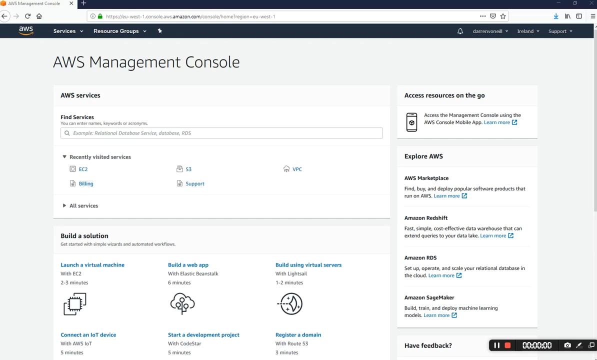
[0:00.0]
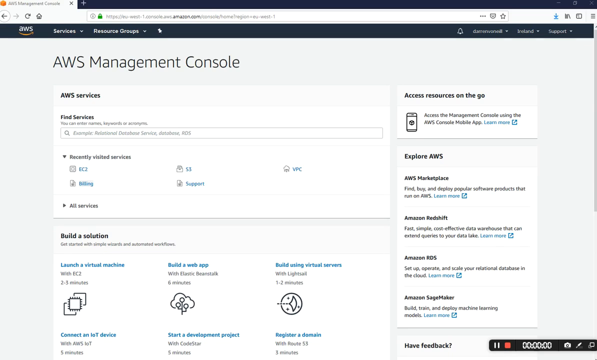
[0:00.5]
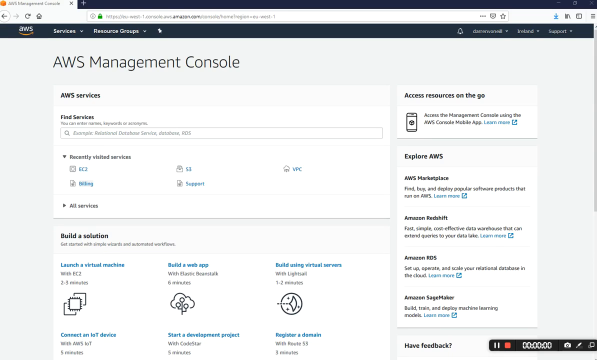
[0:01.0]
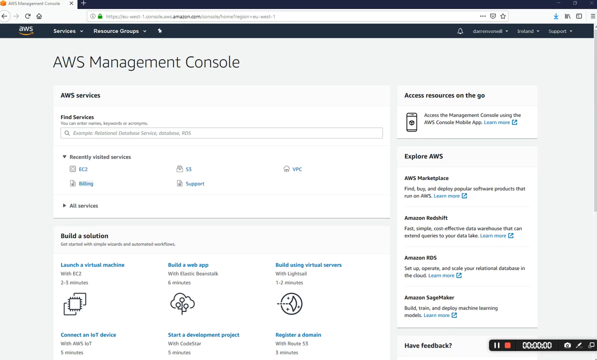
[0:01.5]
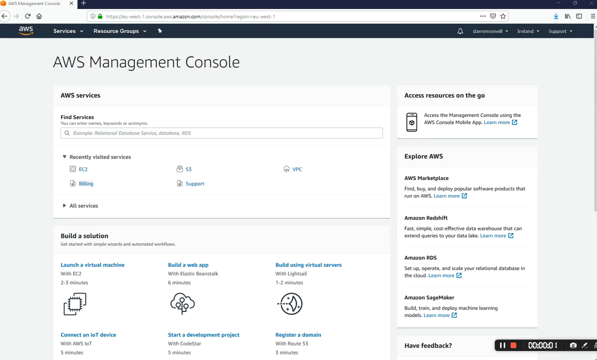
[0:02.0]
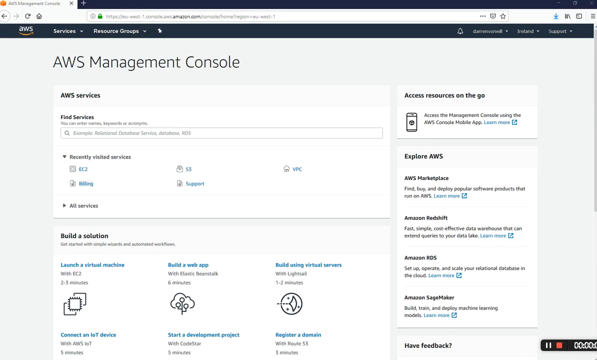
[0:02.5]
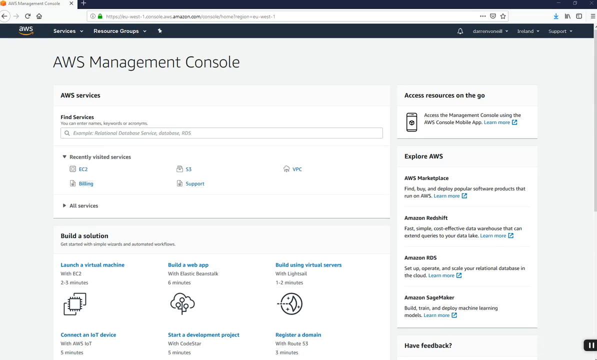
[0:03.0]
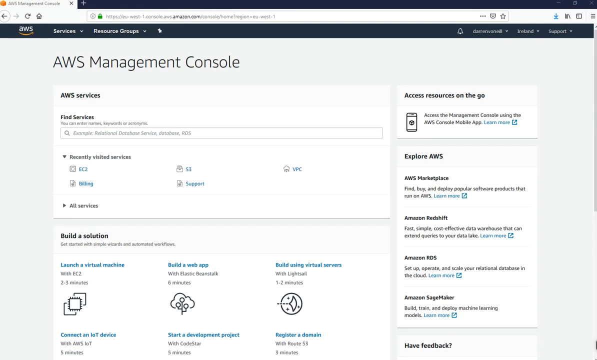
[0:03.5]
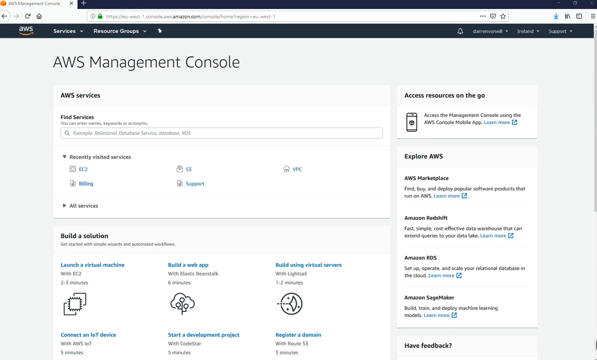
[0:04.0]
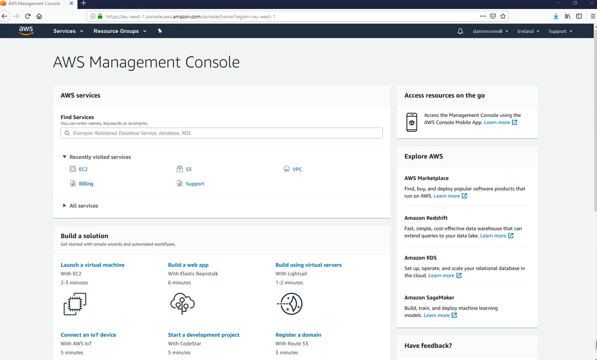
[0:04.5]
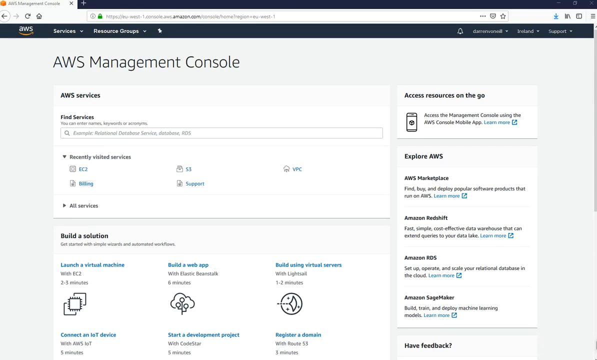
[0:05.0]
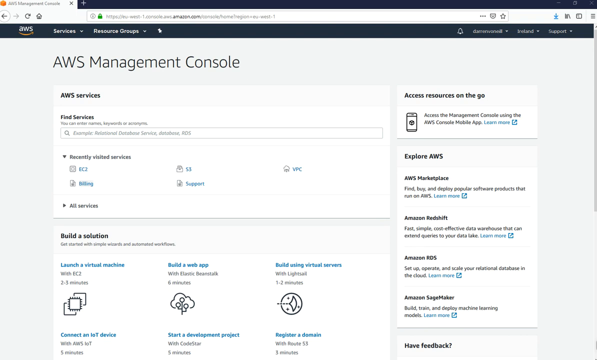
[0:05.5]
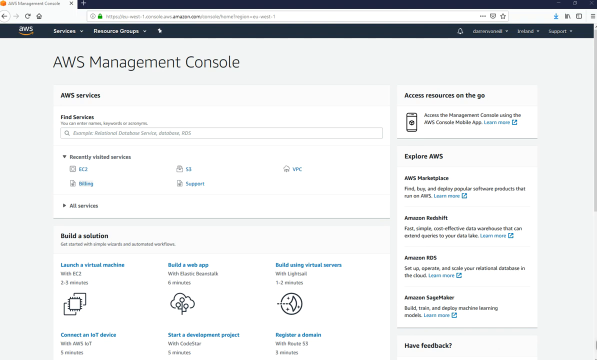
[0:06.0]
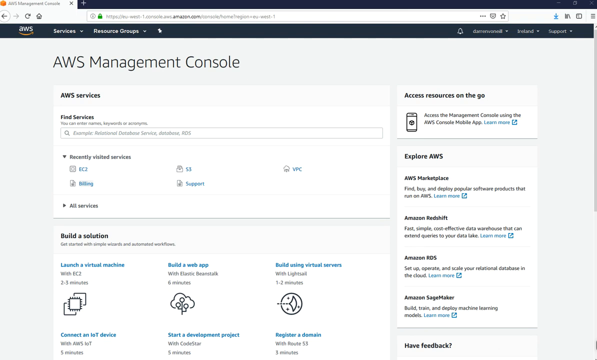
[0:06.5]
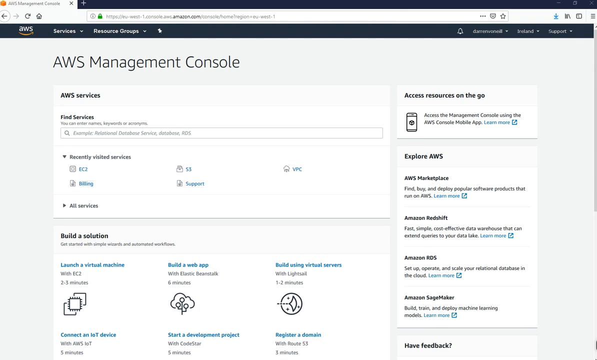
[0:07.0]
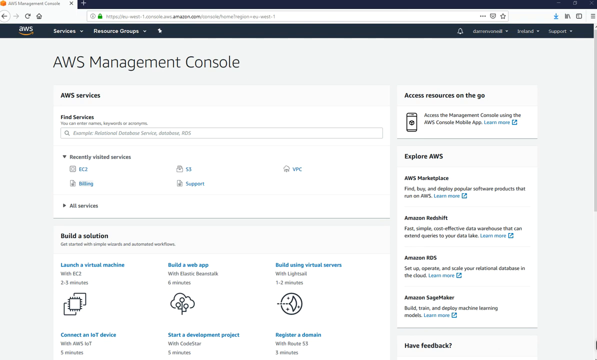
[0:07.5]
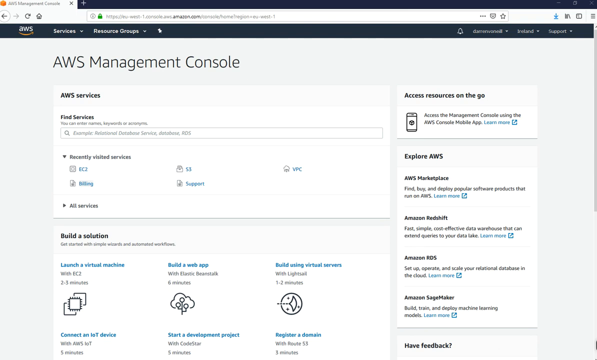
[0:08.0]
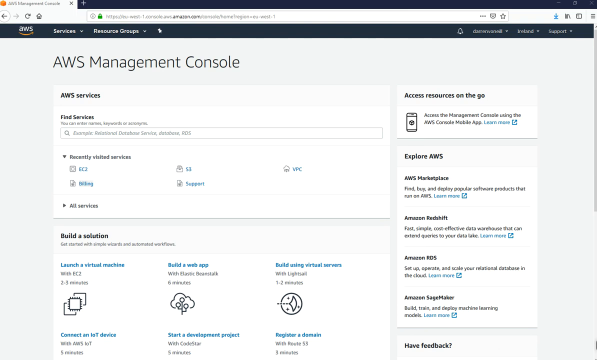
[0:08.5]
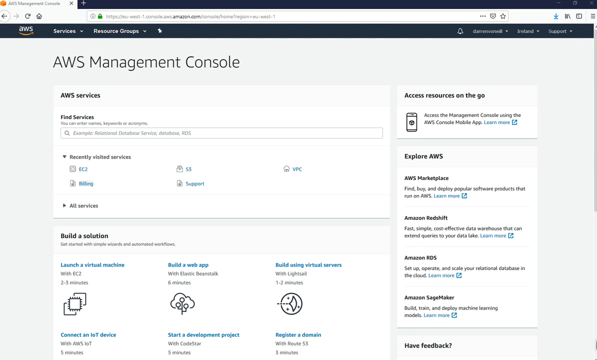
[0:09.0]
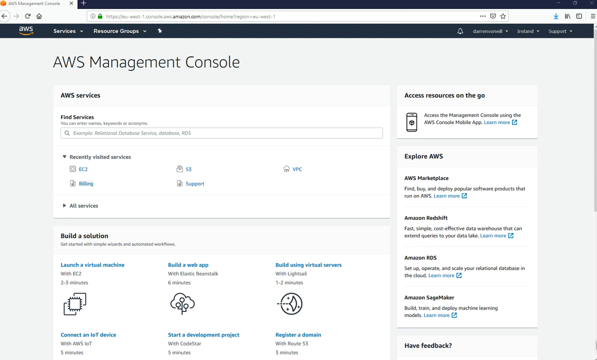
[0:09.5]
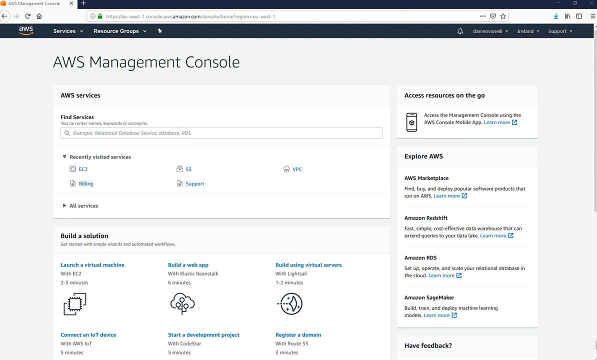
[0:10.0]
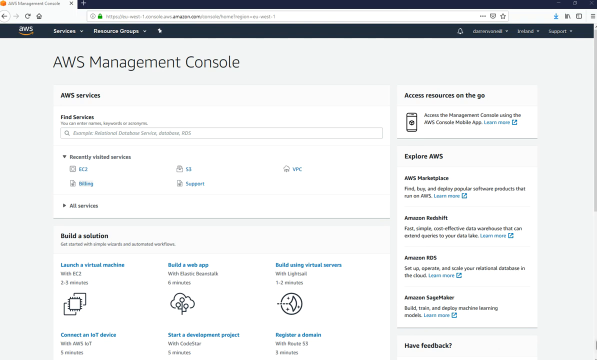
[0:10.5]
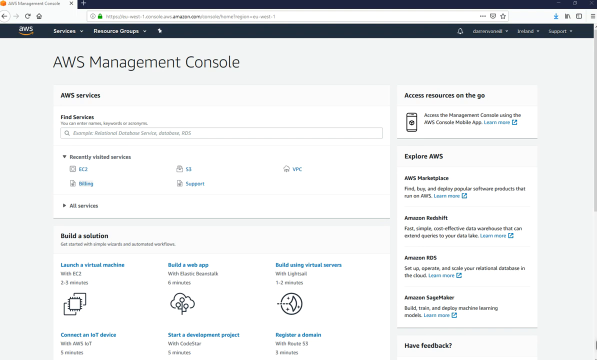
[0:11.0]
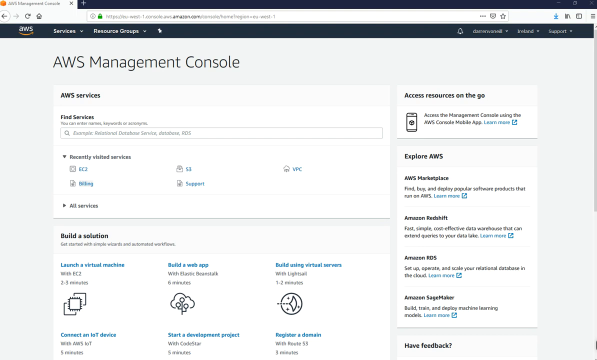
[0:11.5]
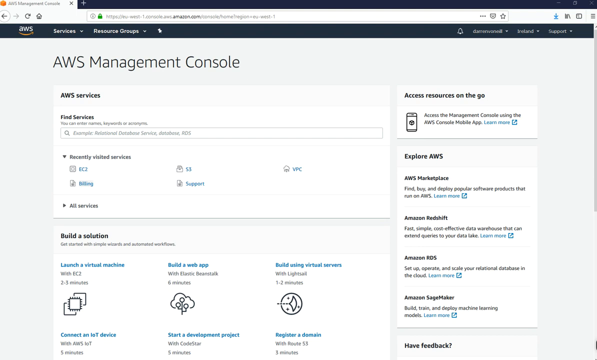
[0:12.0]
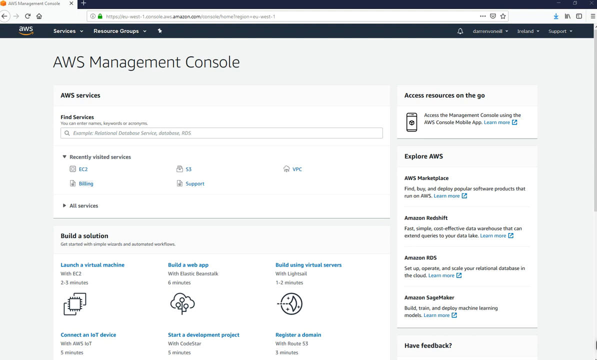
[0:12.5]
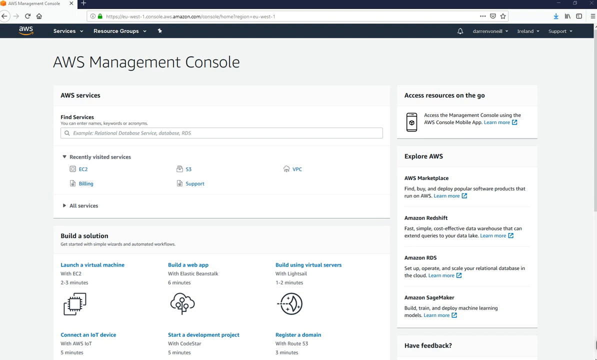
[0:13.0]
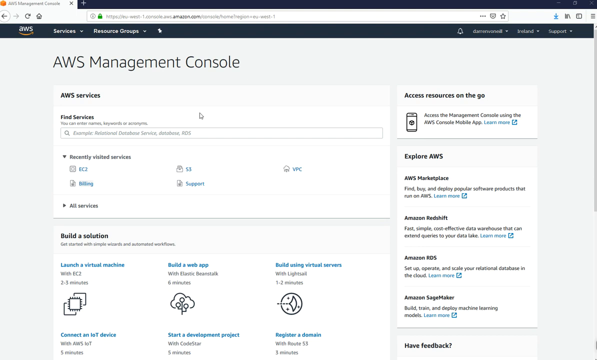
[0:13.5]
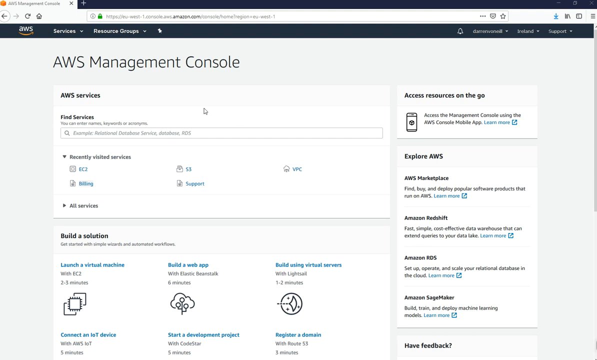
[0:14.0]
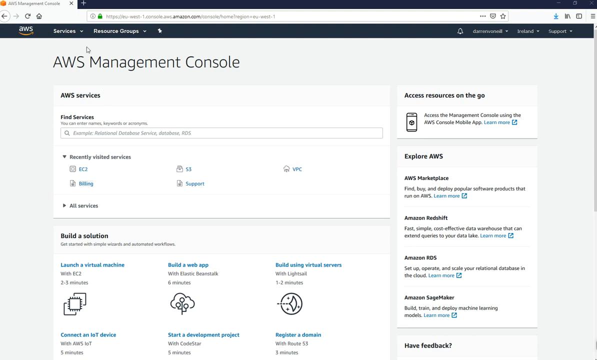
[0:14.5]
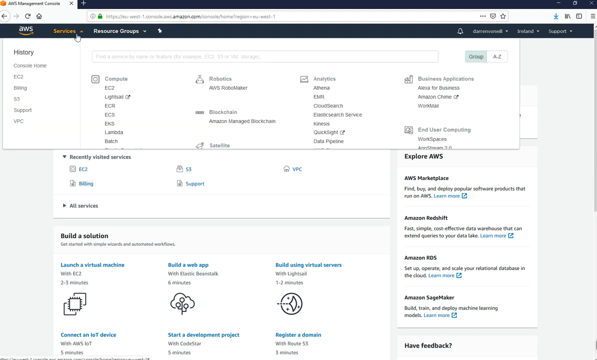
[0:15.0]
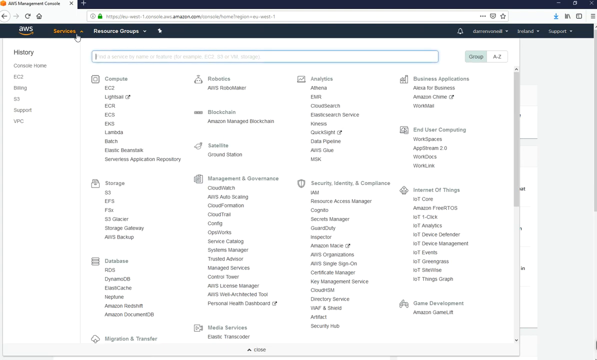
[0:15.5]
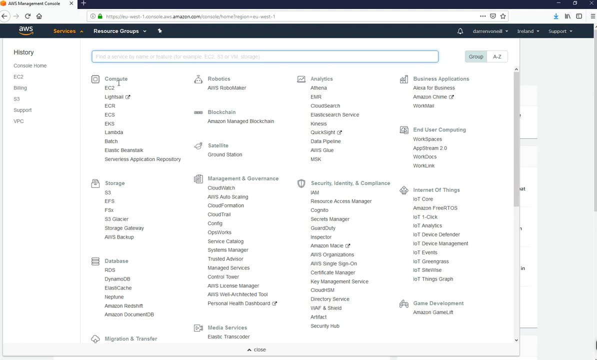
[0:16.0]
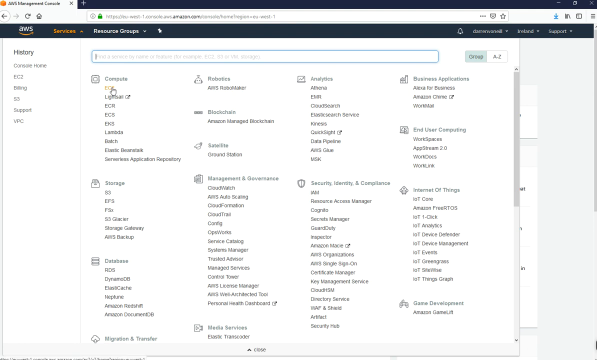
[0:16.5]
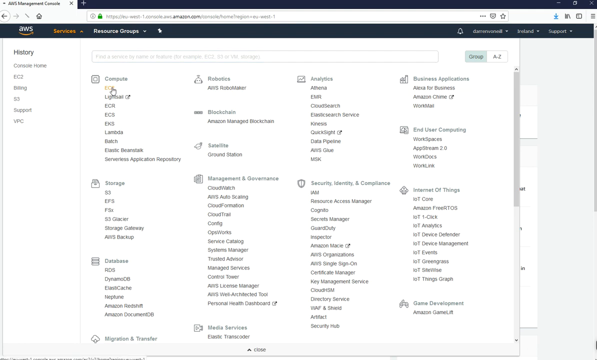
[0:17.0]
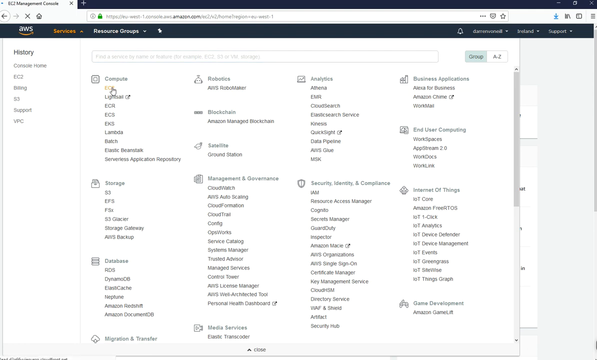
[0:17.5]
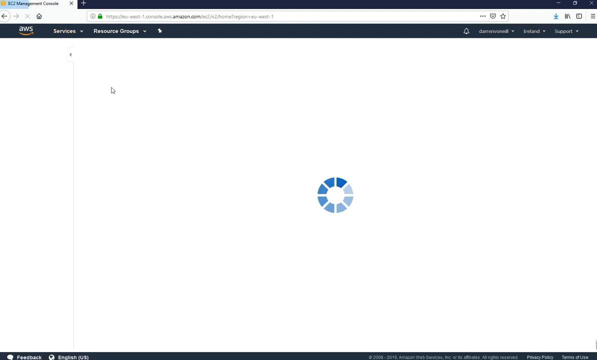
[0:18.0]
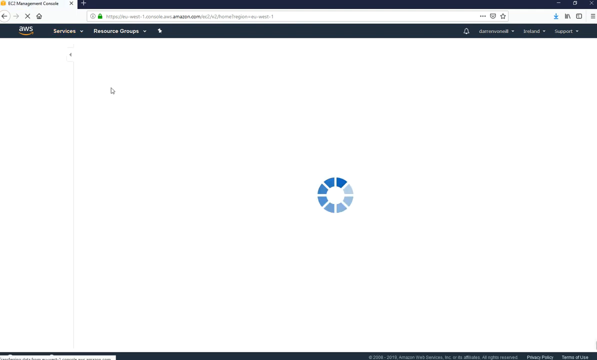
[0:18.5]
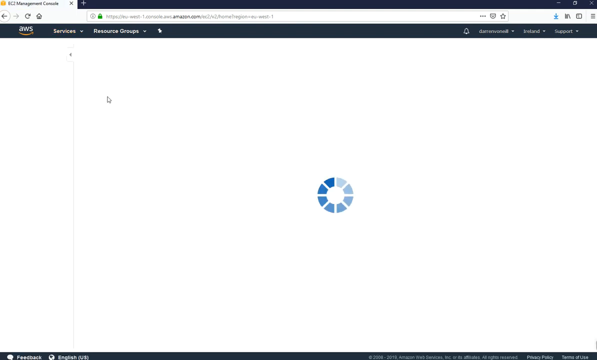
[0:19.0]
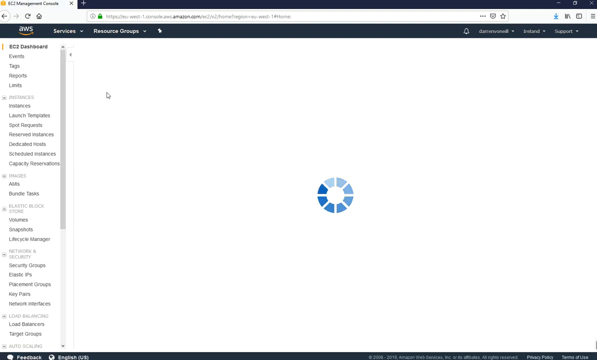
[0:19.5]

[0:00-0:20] A web page is displayed on a PC monitor: an Amazon.com page for the AWS Management Console. It has three sections. The first is AWS services, with a search bar for finding services; below that is a section for recently visited services, and finally all services, with dropdown arrows next to them. Below that is a section called build a solution, with six visible links. There is another section for access resources on the go, and below that, explore AWS, followed by Marketplace, Amazon Redshift, Amazon RDS, and Amazon SageMaker. A cursor moves across the page and clicks the dropdown arrow for services, then Compute, and clicks the first entry under Compute, which brings up another page of information.